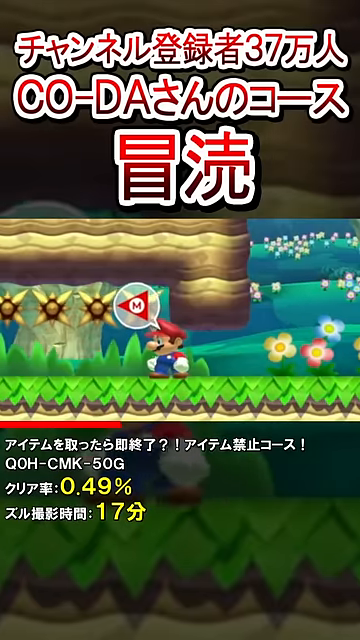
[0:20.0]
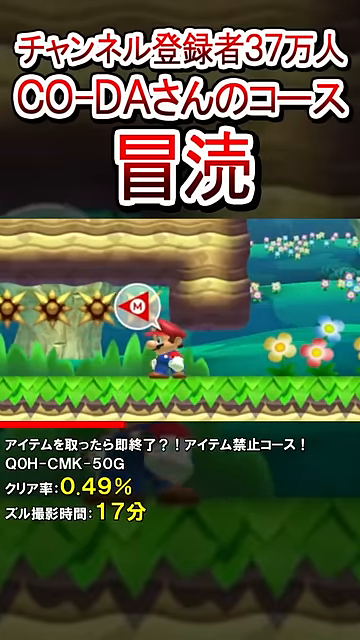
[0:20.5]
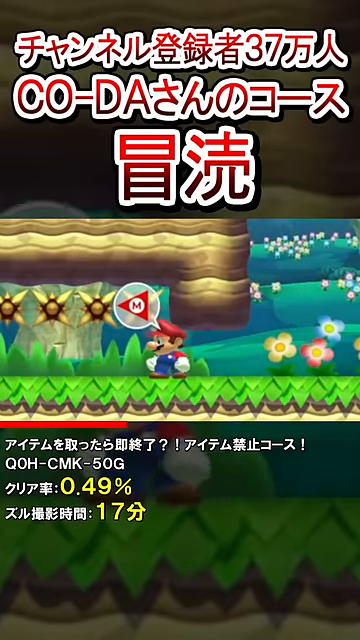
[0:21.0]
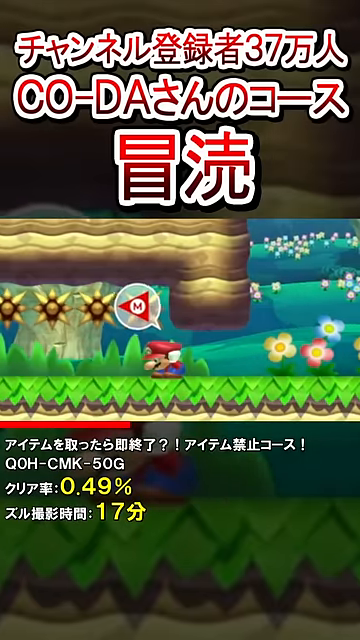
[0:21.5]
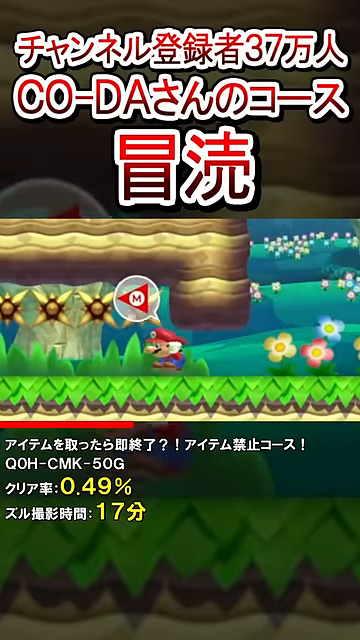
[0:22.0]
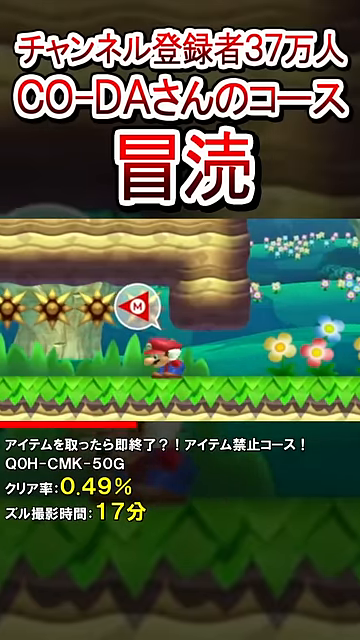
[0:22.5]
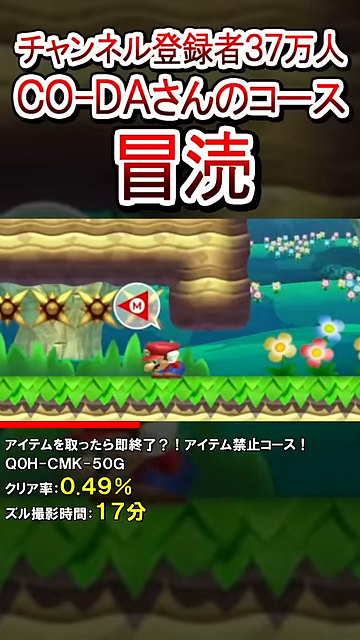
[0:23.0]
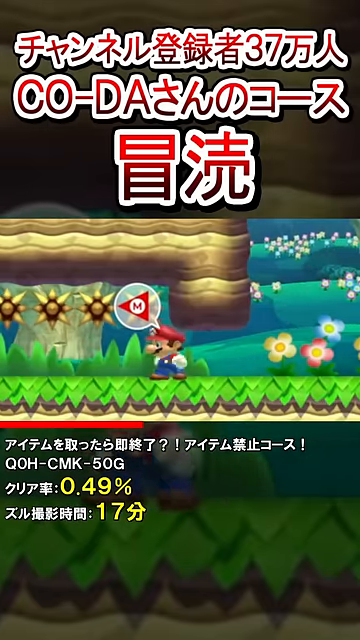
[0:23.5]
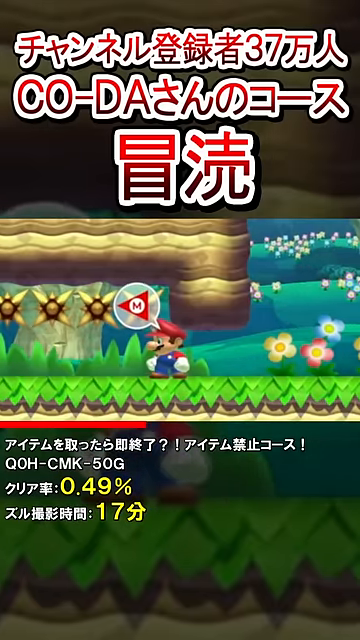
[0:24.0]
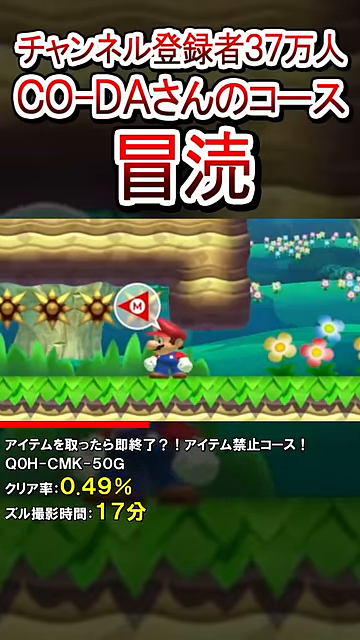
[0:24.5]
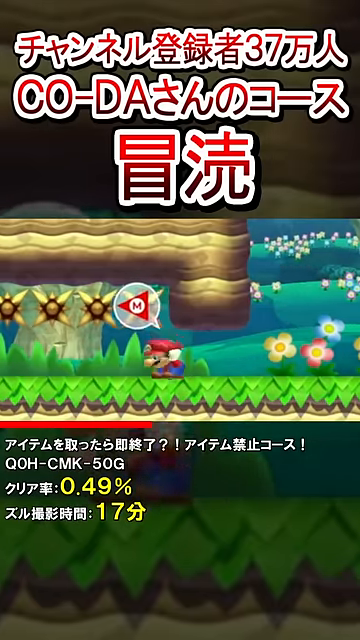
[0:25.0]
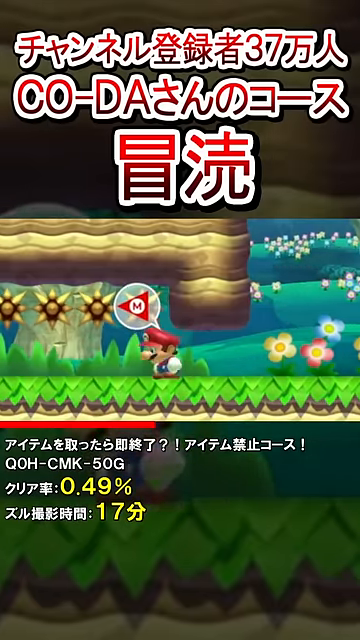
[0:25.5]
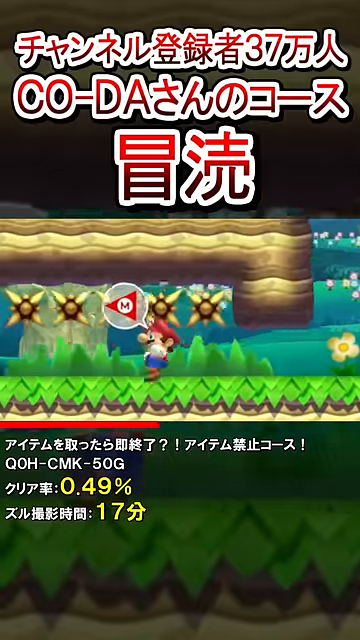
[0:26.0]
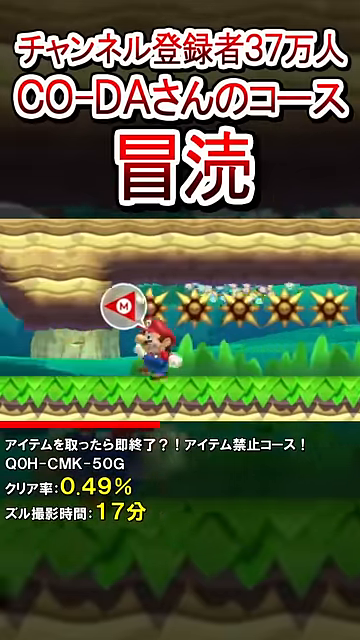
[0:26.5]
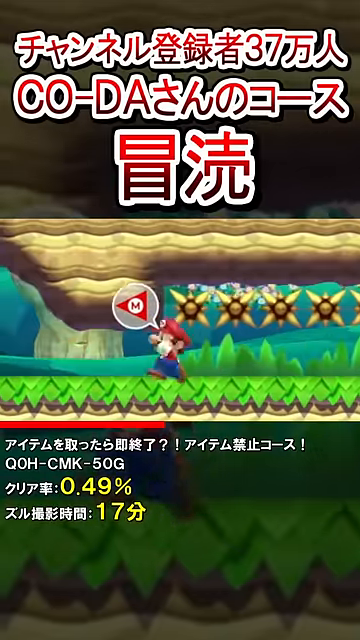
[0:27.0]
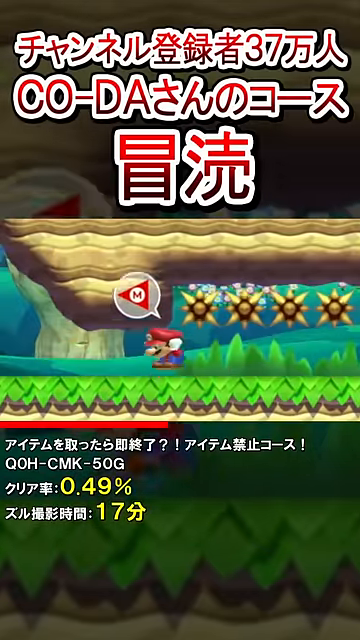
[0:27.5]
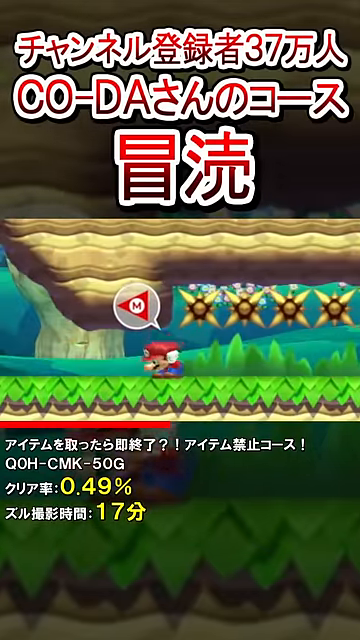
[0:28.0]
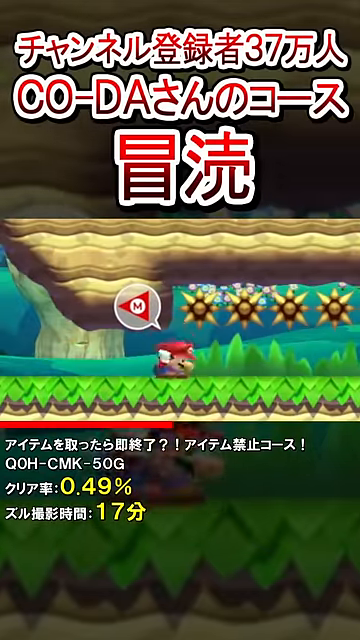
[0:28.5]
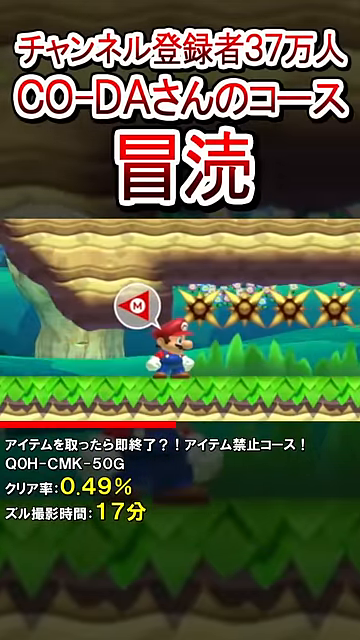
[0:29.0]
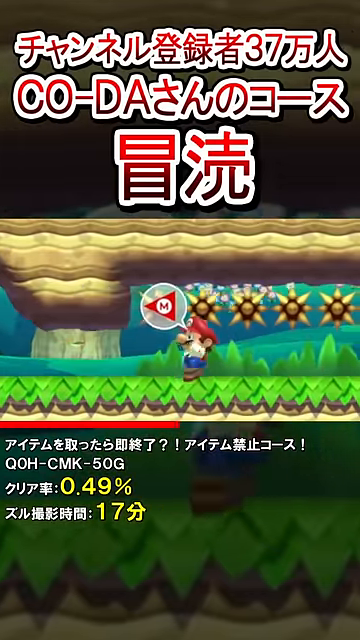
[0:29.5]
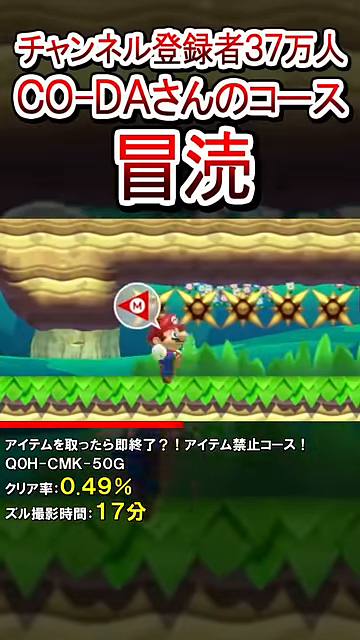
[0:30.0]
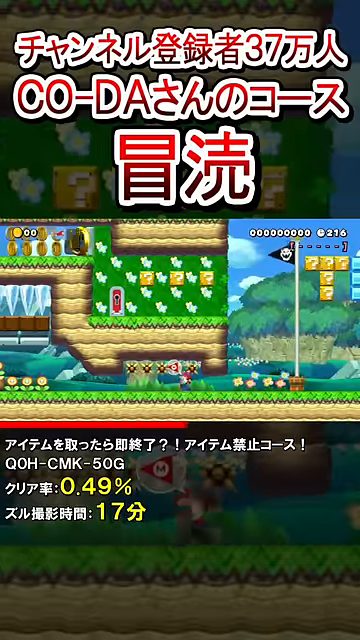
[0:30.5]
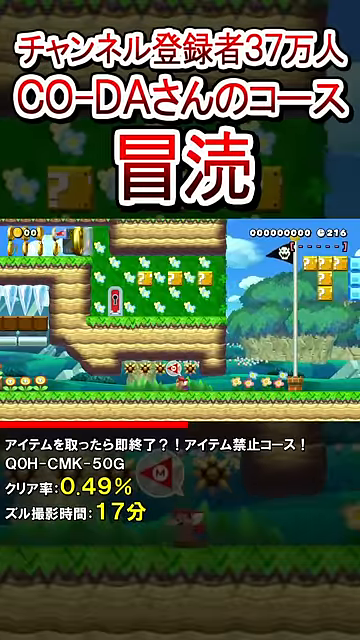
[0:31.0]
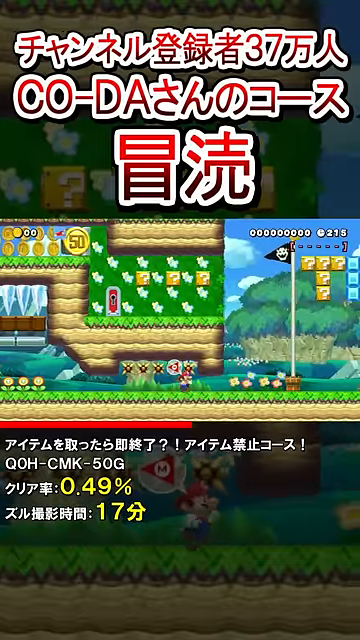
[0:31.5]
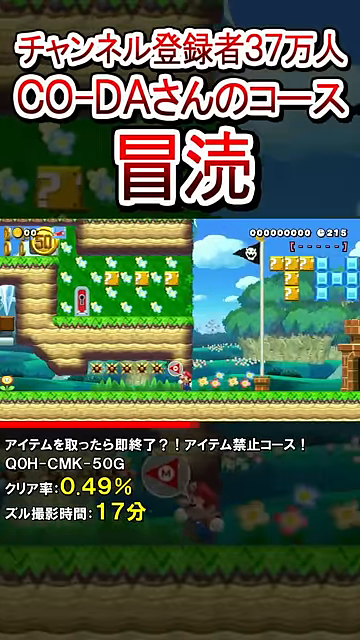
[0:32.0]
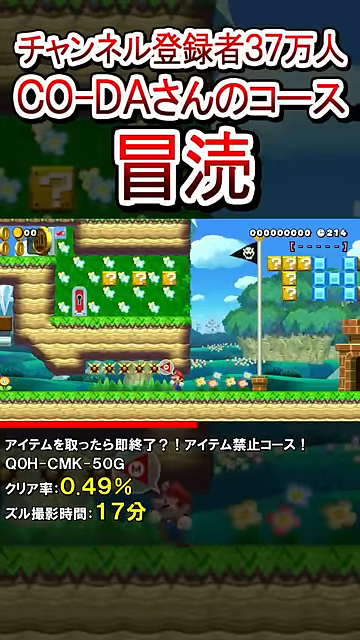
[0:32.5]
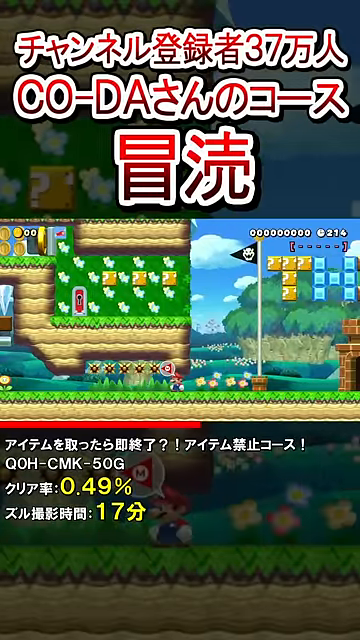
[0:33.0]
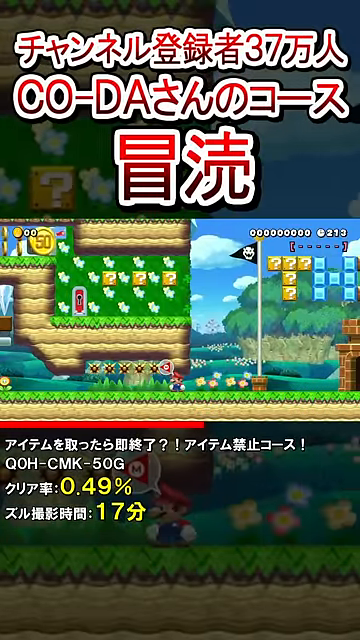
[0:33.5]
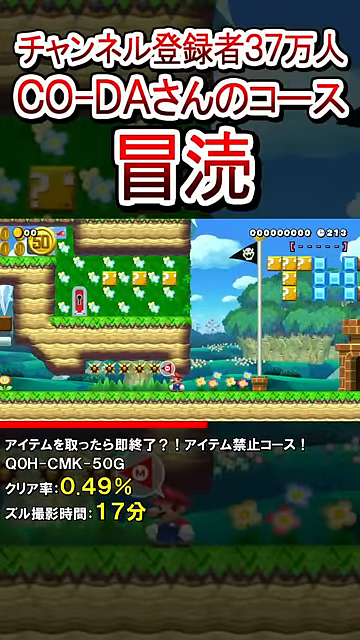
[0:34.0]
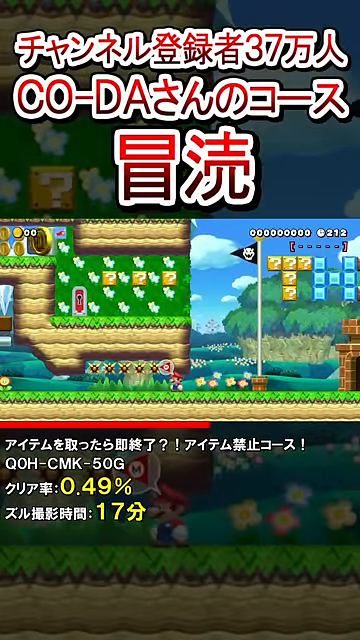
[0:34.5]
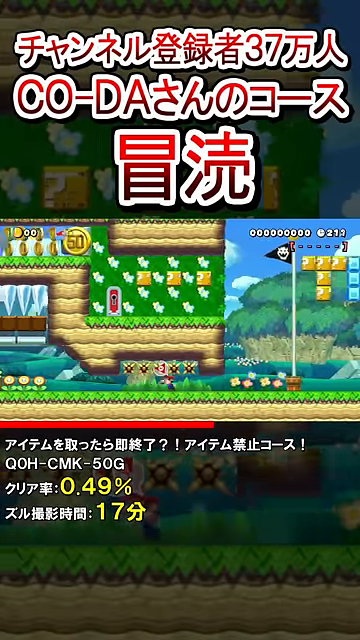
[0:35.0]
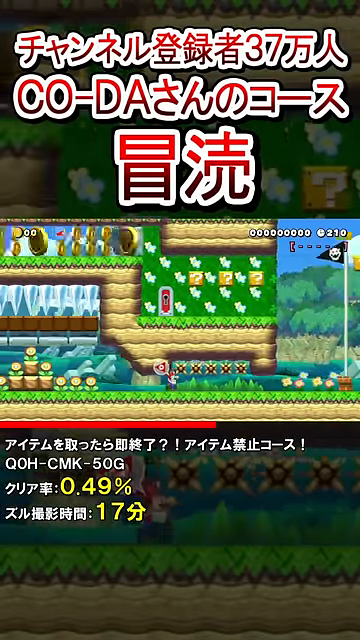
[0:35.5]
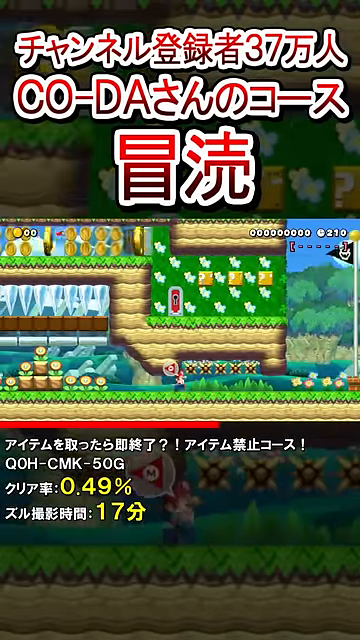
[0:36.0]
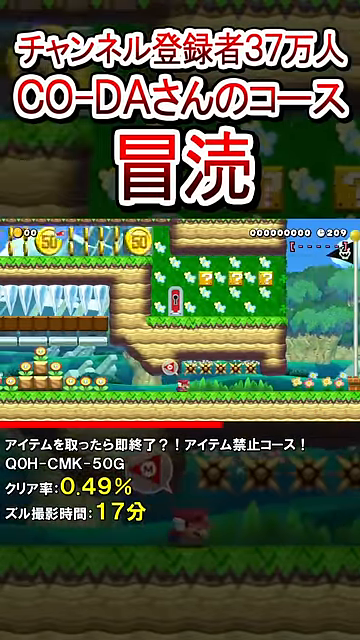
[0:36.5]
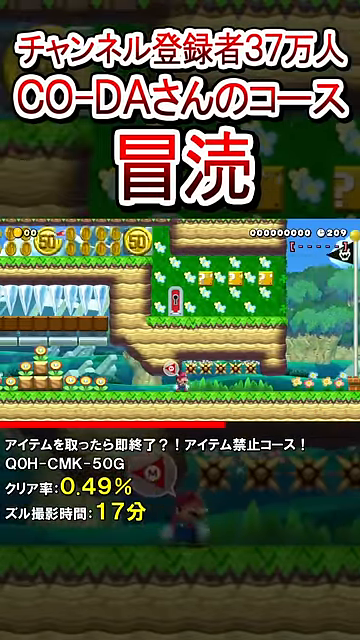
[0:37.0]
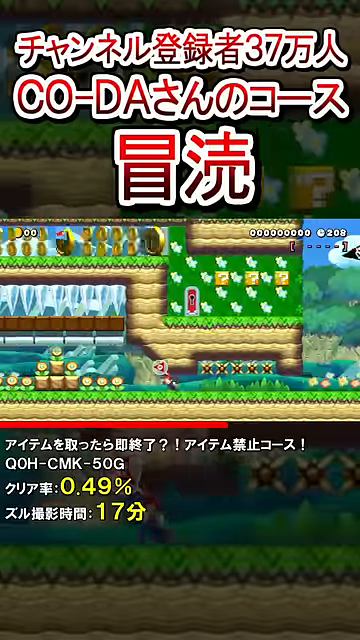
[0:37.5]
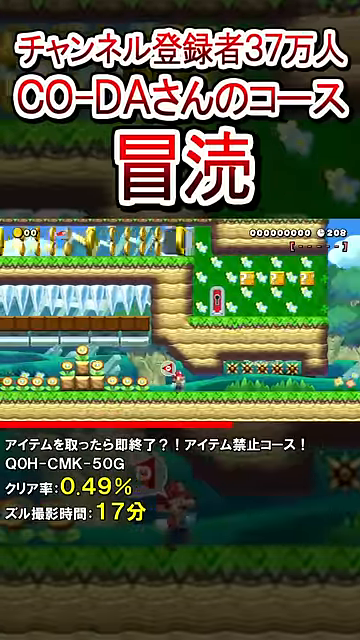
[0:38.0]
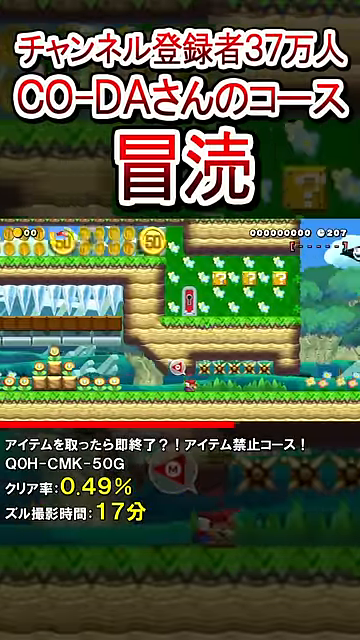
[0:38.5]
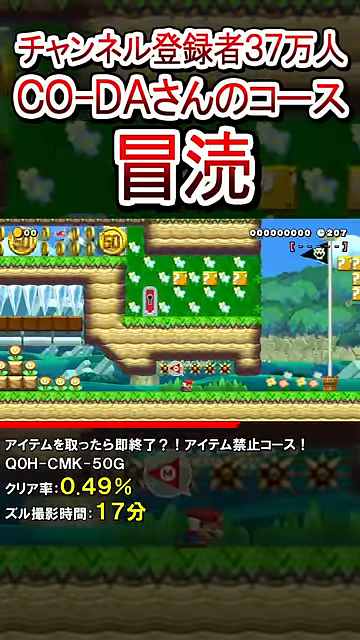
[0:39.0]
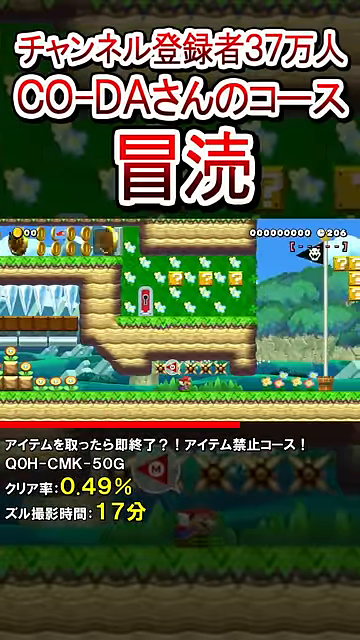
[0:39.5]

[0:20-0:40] Further into the game, Mario is standing still on the screen. He ducks down to get into a tight space, something like a cave or wall system above him, where the walls come down so that he cannot just run through. As he runs, he ducks and slides, or kind of runs while kneeling, underneath the parts of the wall that stick down from the ceiling and block him from running straight through. The player does not appear to be trying to advance in the game; Mario is shown ducking down and standing up repeatedly, and then running and ducking at the same time so he can run underneath the walls. This seems to be an instructional portion of the video showing how to make Mario duck and run under these parts of the walls.